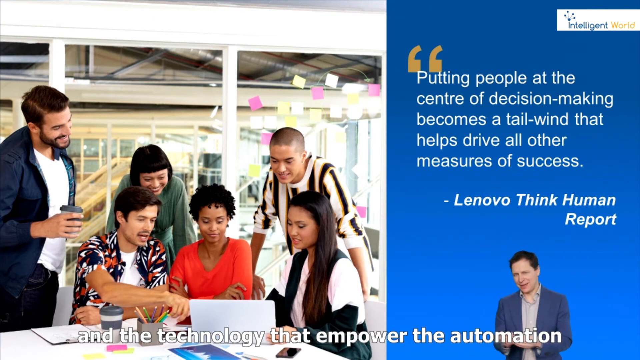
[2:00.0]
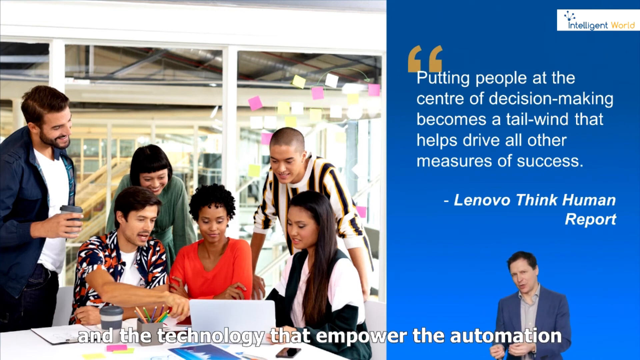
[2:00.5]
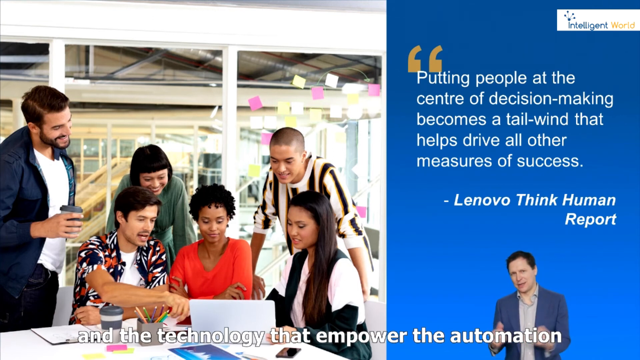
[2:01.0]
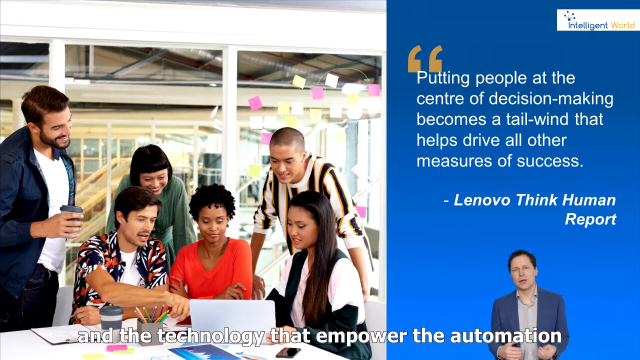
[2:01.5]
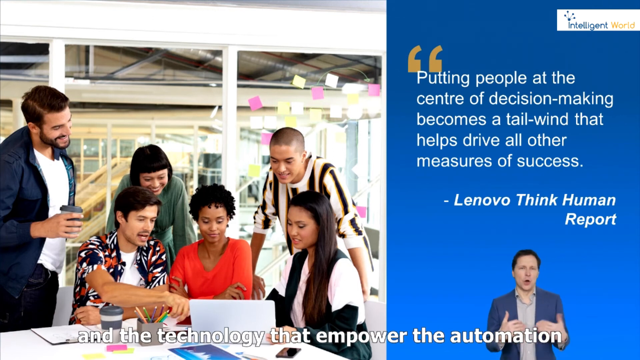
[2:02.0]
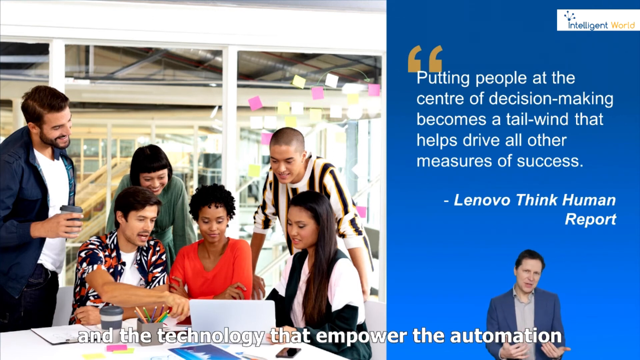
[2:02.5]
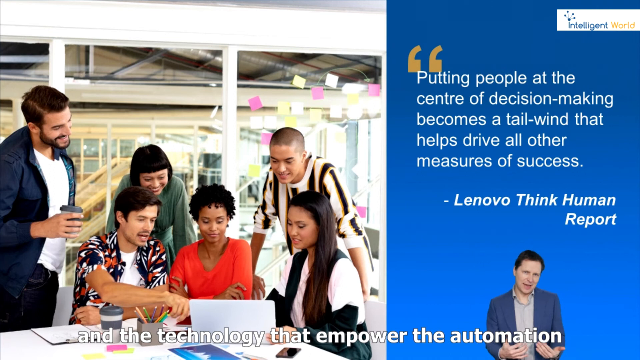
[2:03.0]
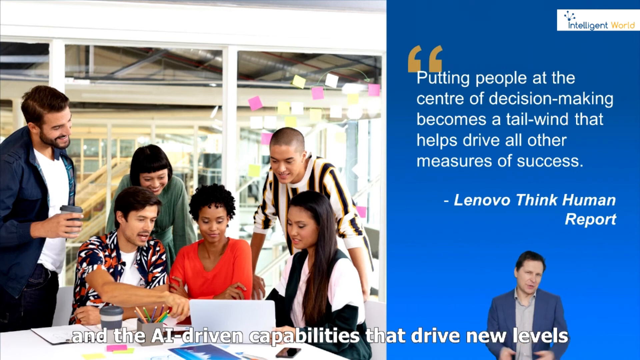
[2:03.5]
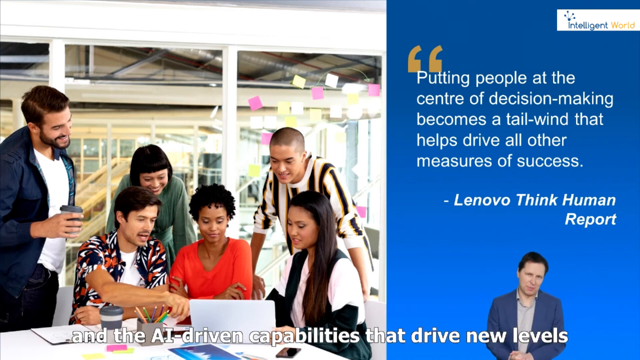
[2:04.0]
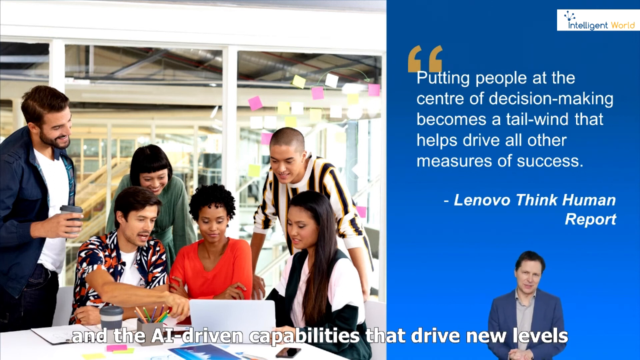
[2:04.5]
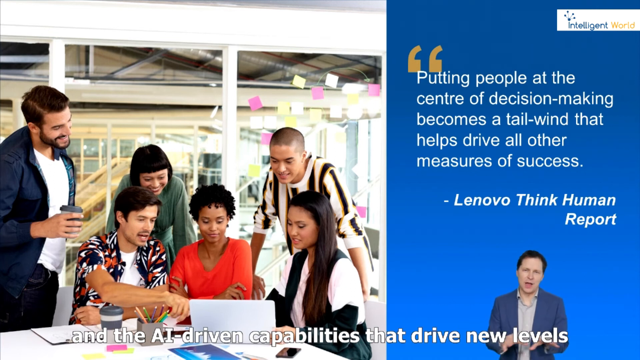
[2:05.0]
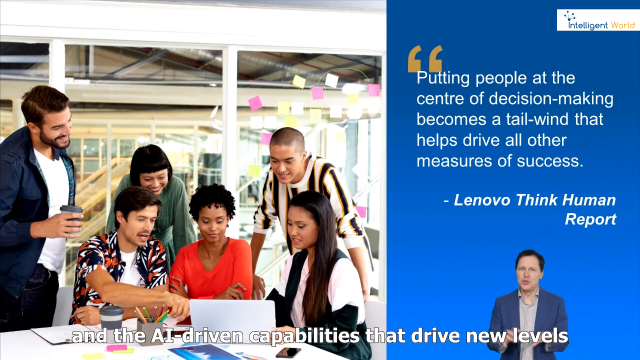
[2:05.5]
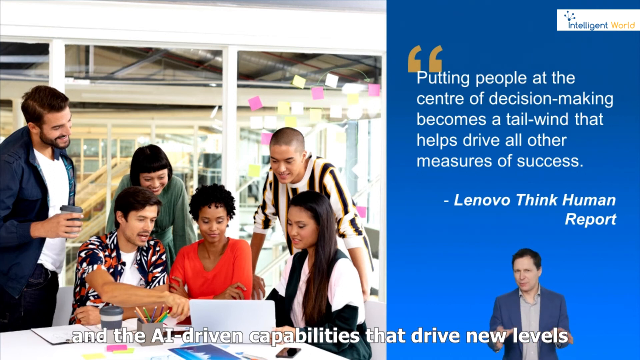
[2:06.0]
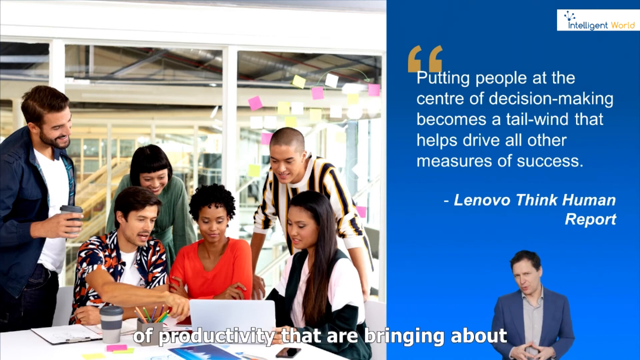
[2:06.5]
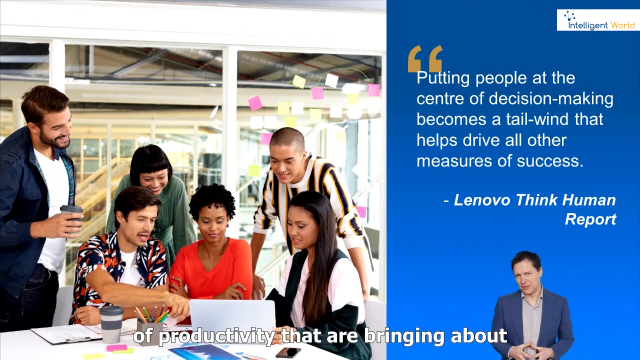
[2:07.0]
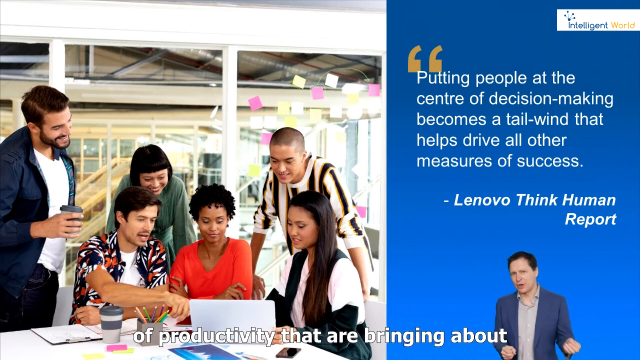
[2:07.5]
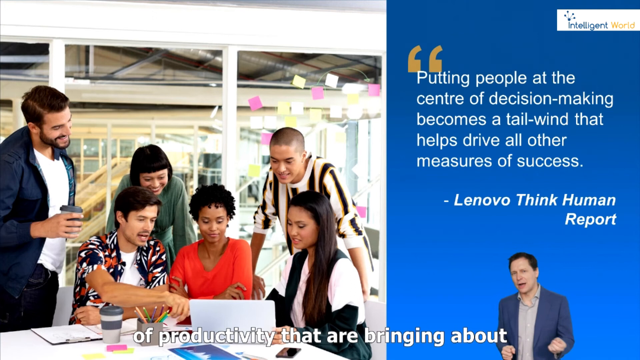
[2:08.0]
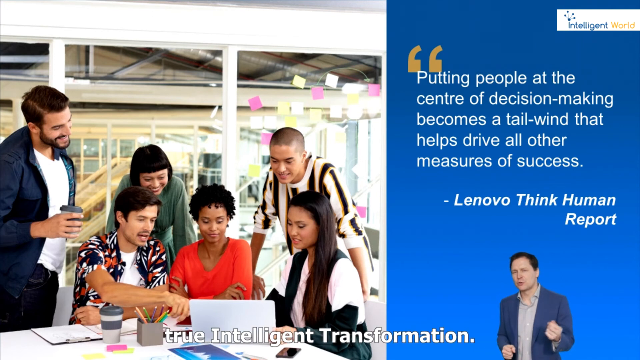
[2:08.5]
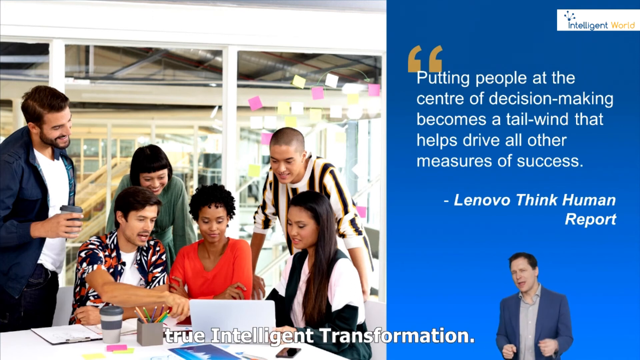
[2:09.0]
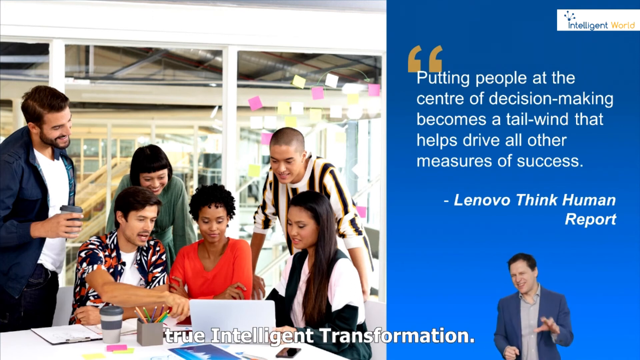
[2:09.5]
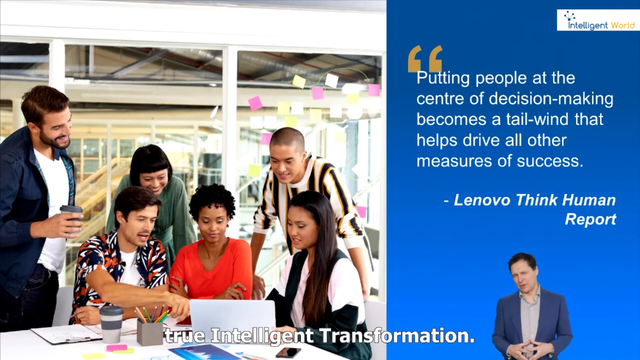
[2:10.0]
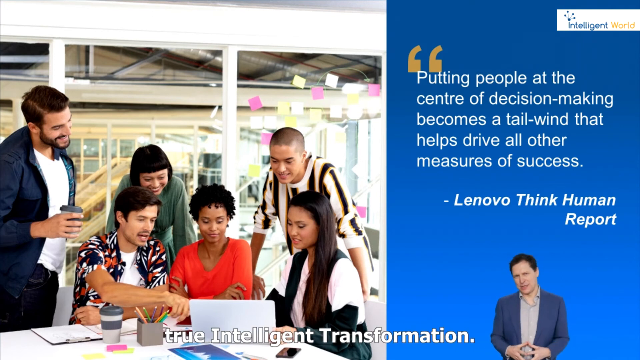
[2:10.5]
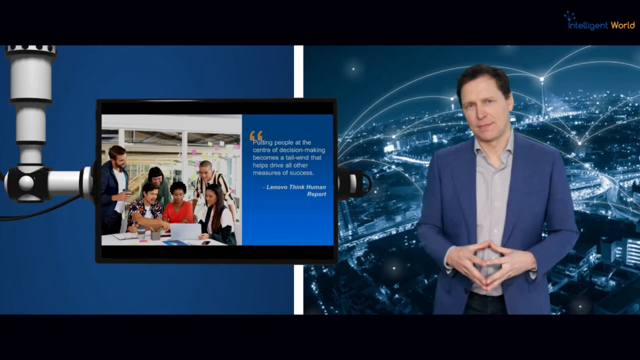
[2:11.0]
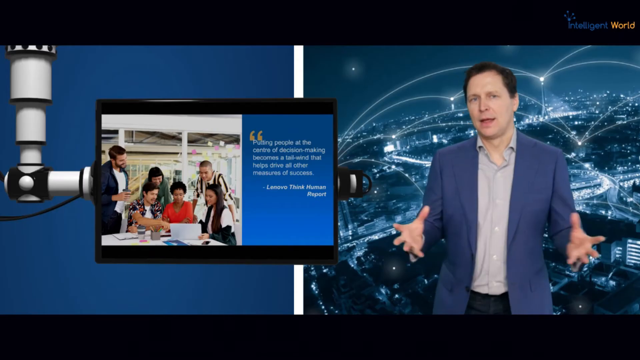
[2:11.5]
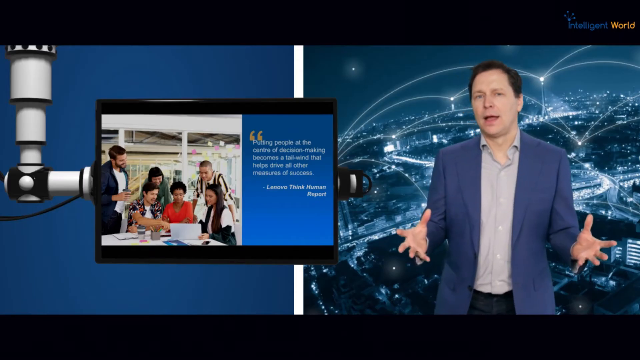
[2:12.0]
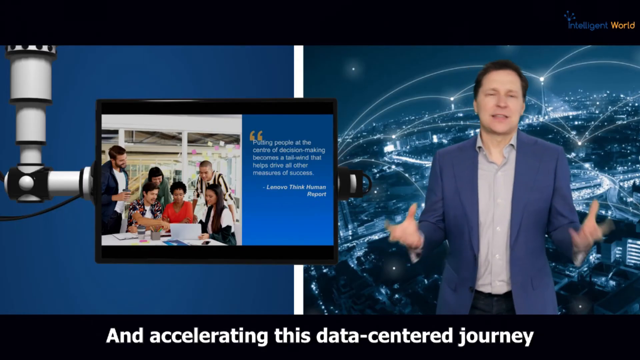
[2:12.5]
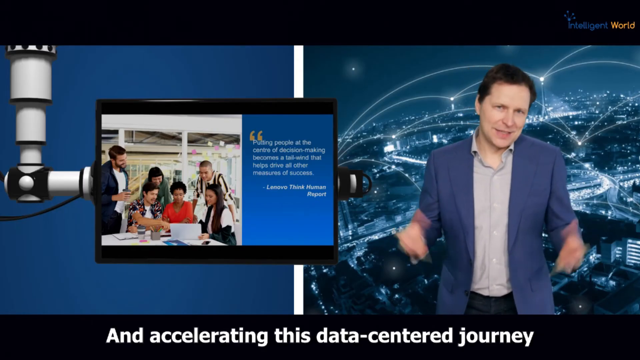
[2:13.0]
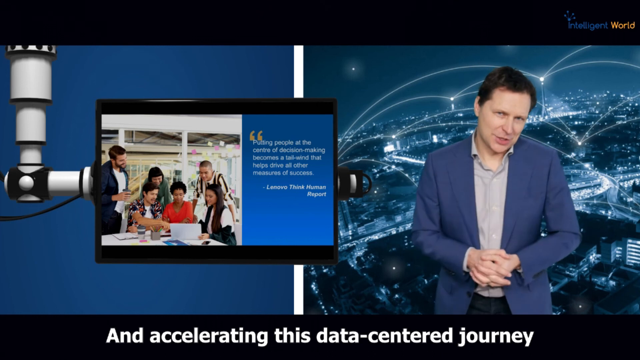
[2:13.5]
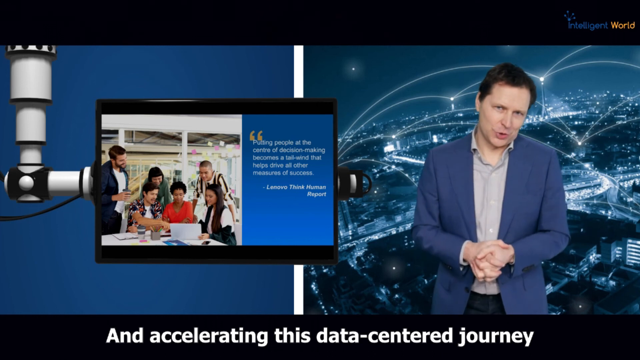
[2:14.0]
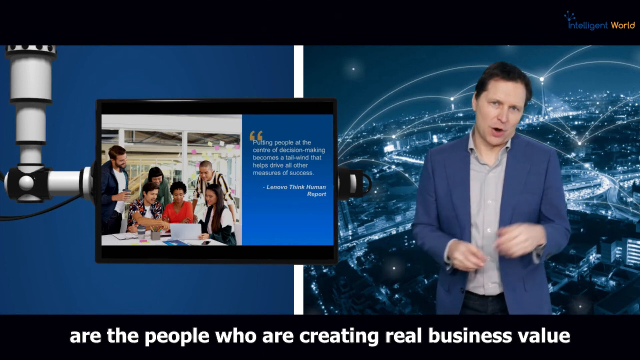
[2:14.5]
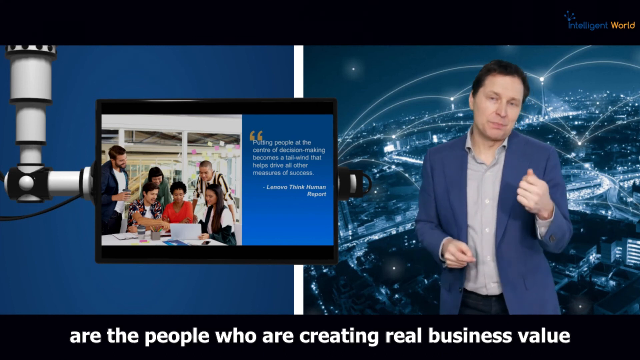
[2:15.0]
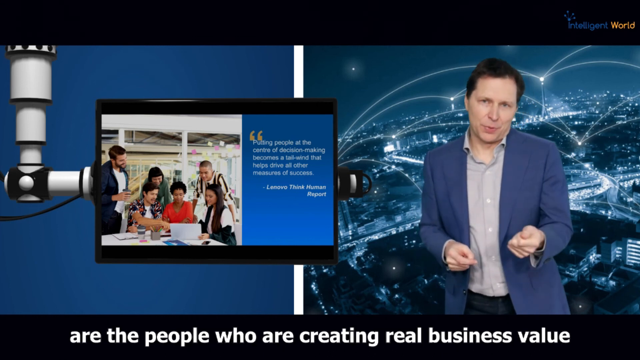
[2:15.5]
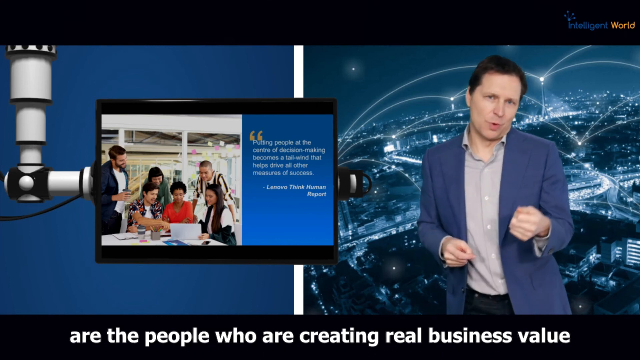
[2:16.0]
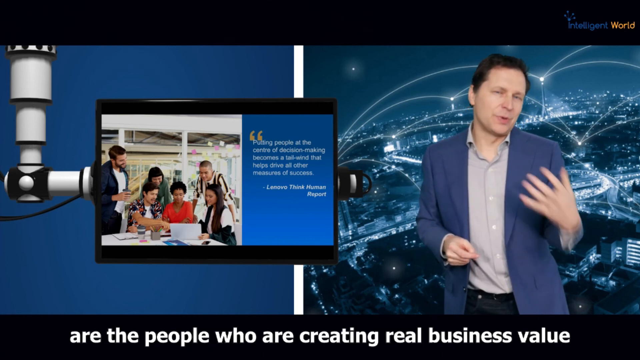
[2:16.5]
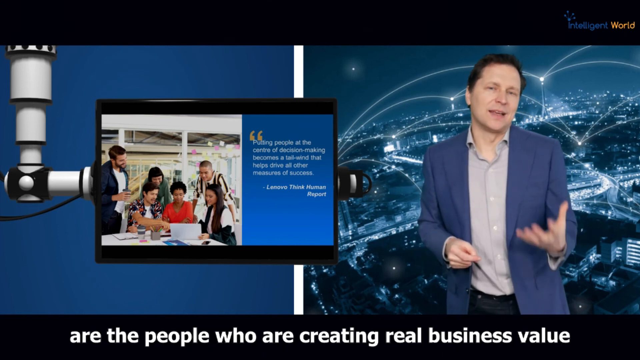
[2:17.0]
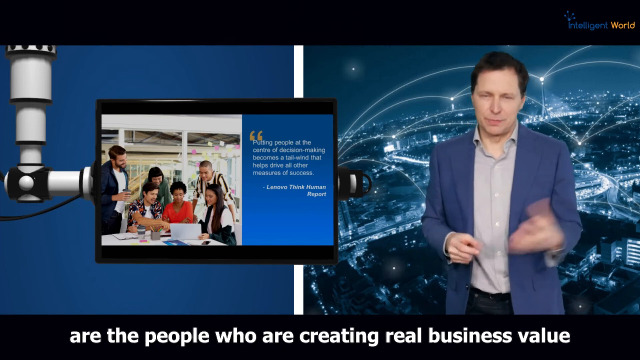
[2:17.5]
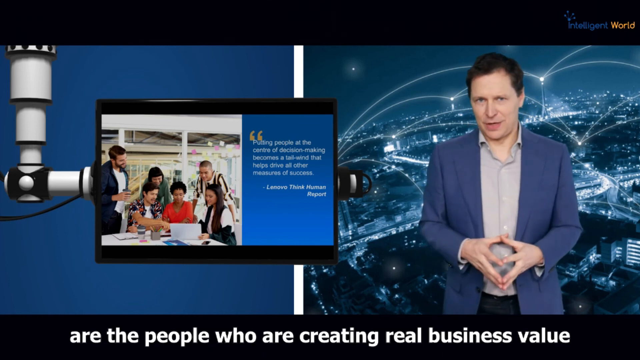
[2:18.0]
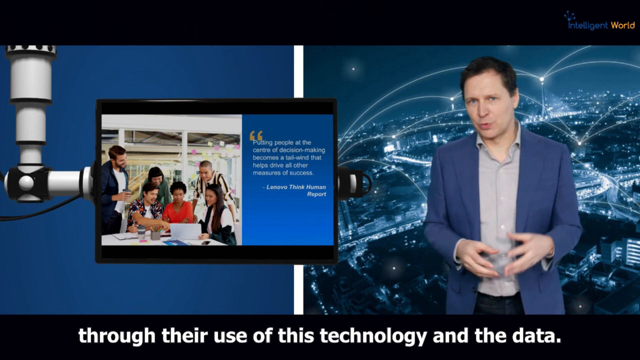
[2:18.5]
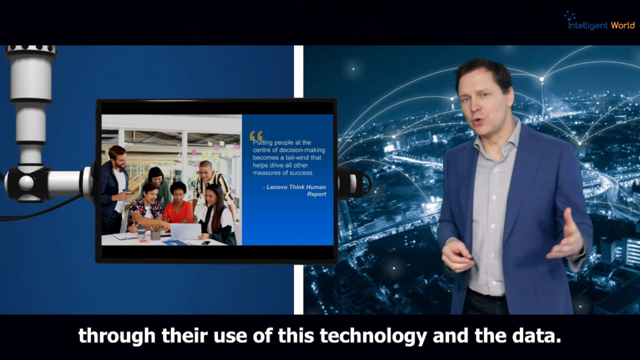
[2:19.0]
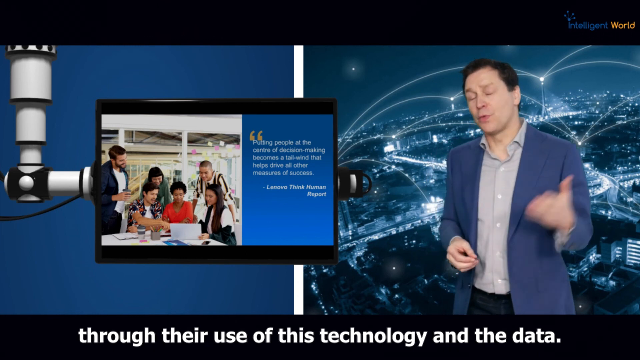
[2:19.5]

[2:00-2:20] The man giving the presentation is still in the bottom right-hand corner as another slide appears, still showing the three men and three women. A closed caption at the bottom reads "technology that empowers automation," and the slide still shows a quote from the Lenovo Think Human Report. Captions continue about productivity bringing about true intelligent transformation. The camera then zooms out and the man is larger again, back on the right side with the backdrop of the city at night, while the PowerPoint is to the left, kind of minimized. Captions mention people creating real business value. He seems very convinced, his facial features looking astute and positive.